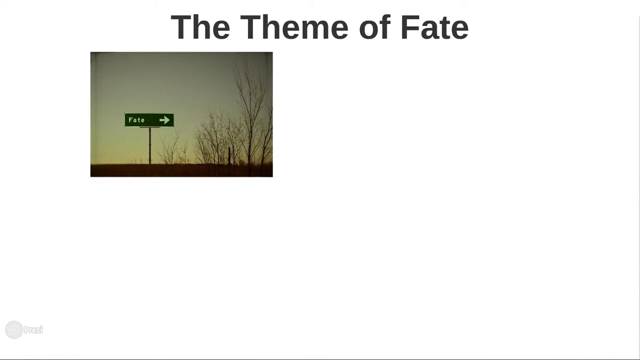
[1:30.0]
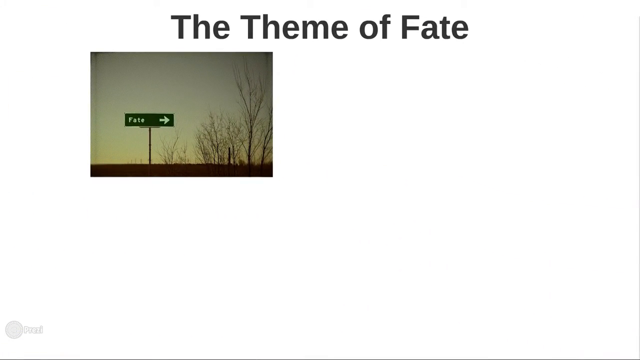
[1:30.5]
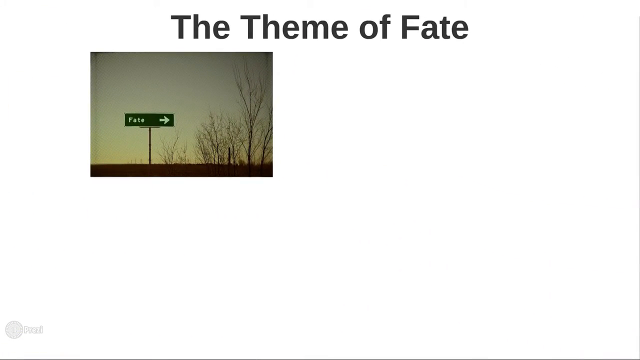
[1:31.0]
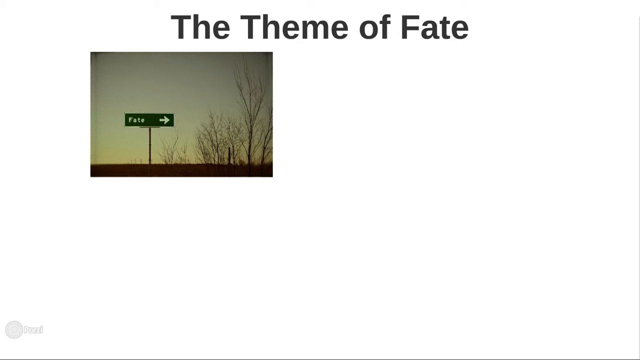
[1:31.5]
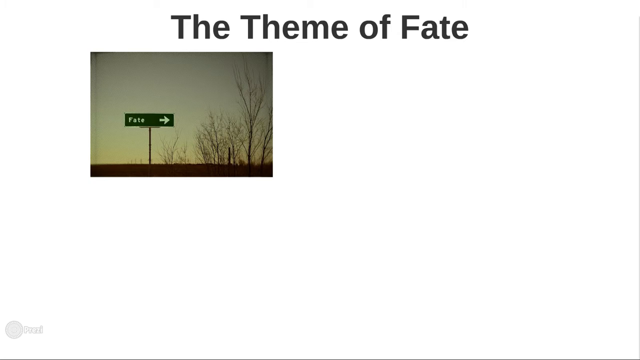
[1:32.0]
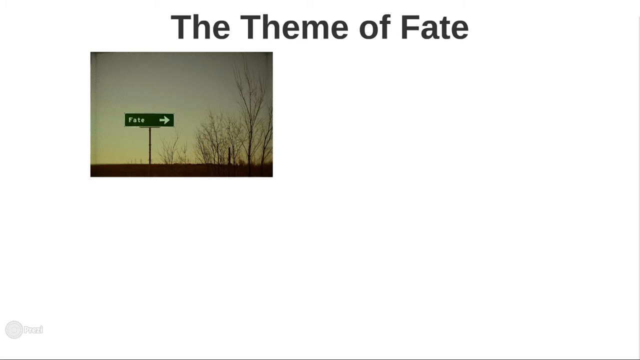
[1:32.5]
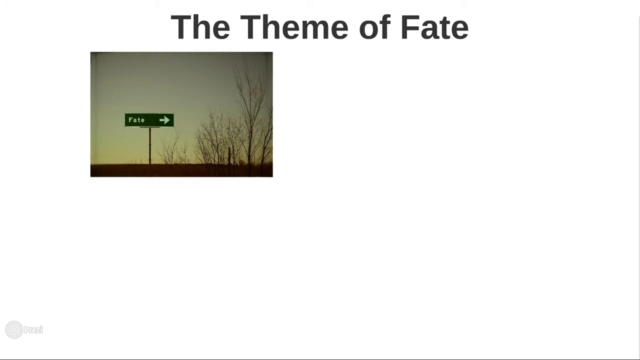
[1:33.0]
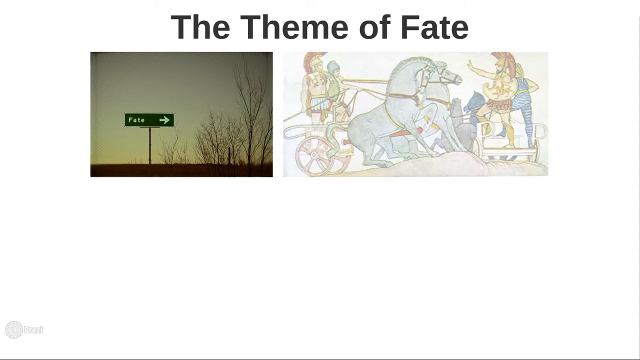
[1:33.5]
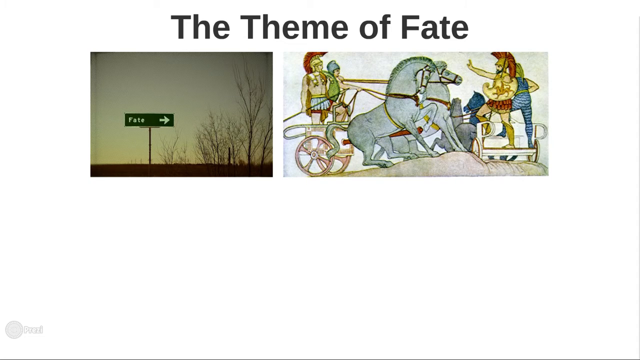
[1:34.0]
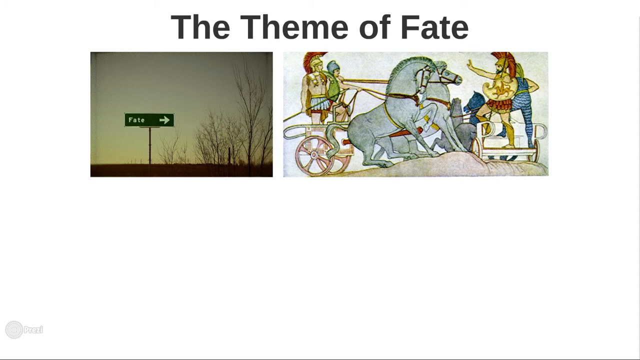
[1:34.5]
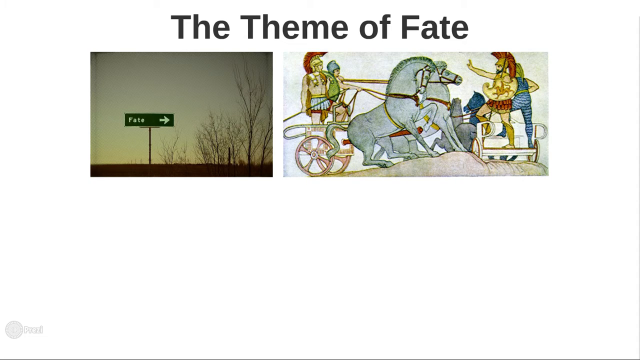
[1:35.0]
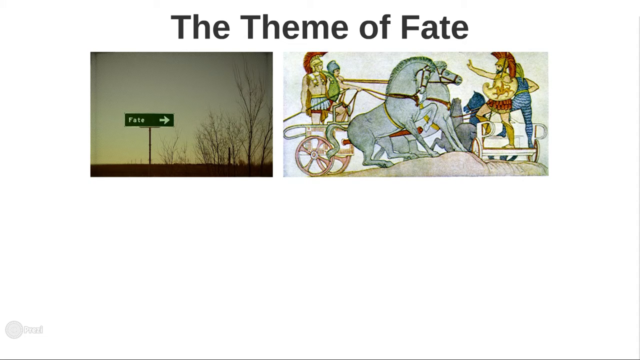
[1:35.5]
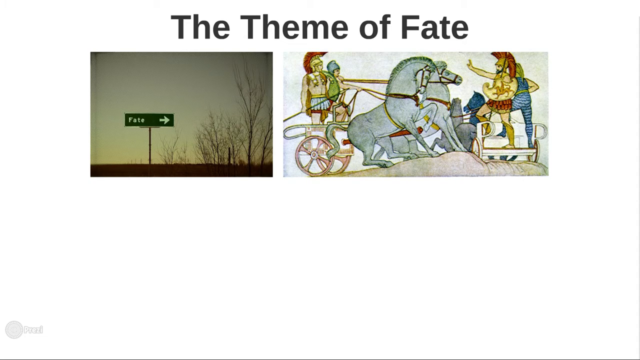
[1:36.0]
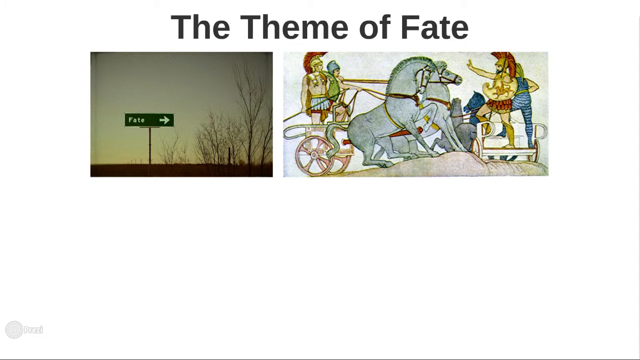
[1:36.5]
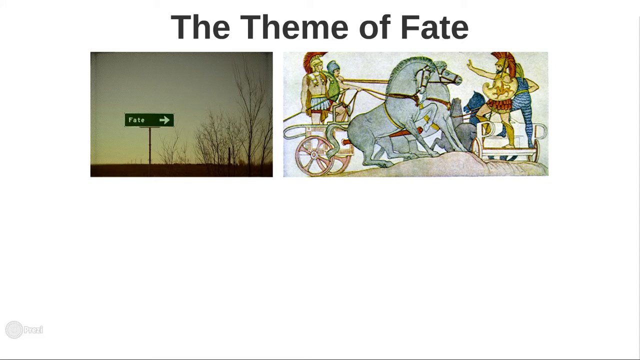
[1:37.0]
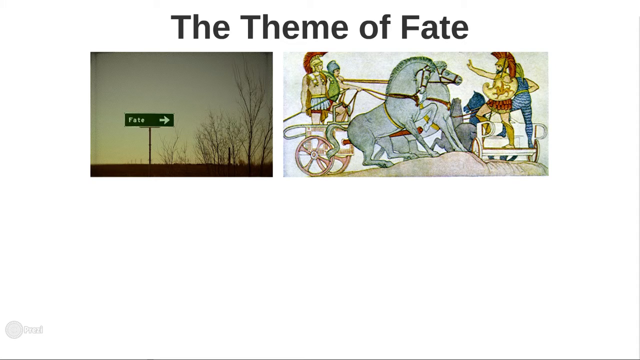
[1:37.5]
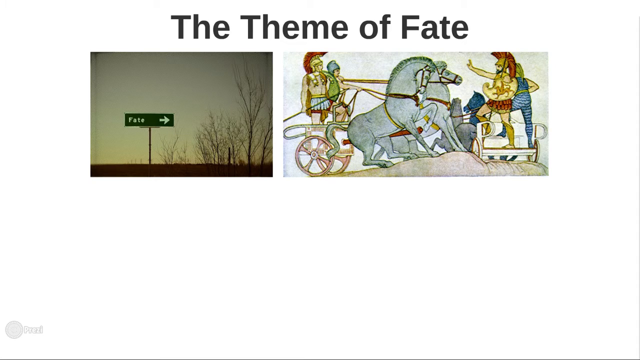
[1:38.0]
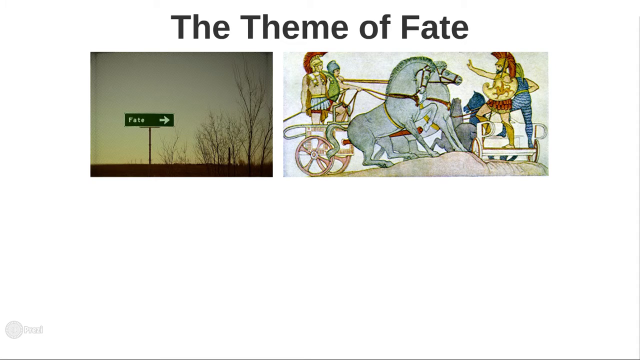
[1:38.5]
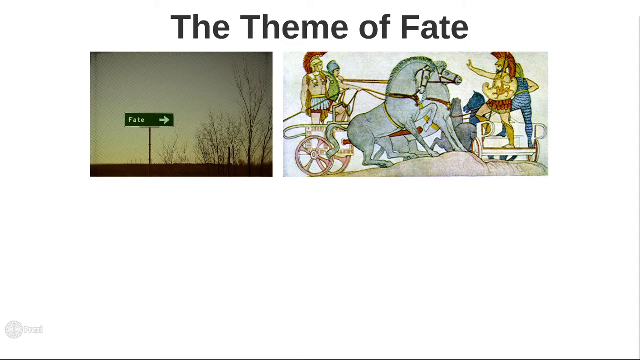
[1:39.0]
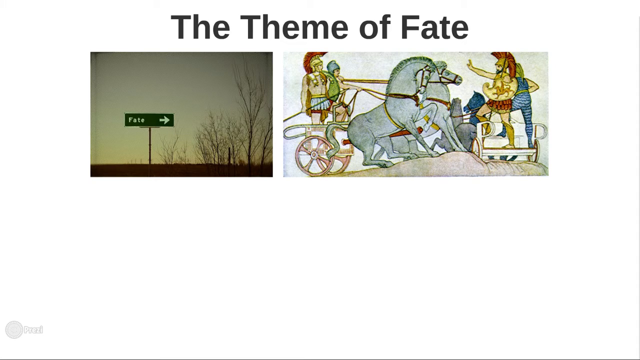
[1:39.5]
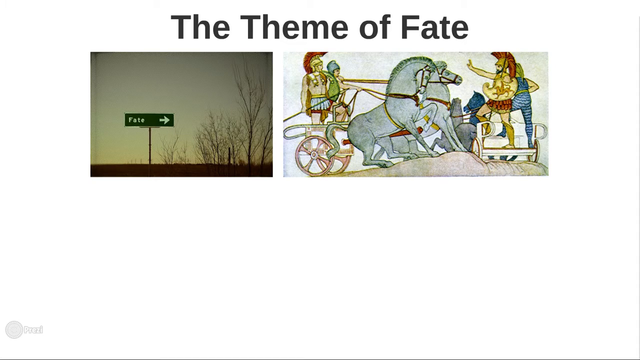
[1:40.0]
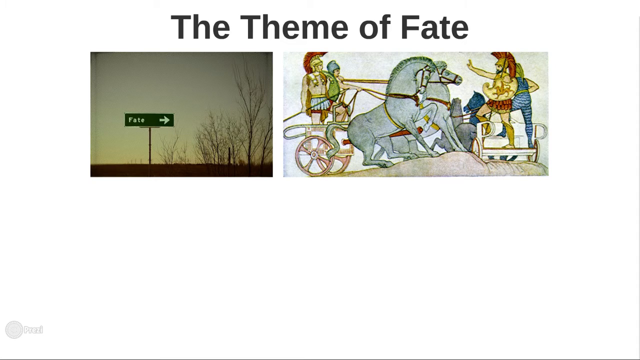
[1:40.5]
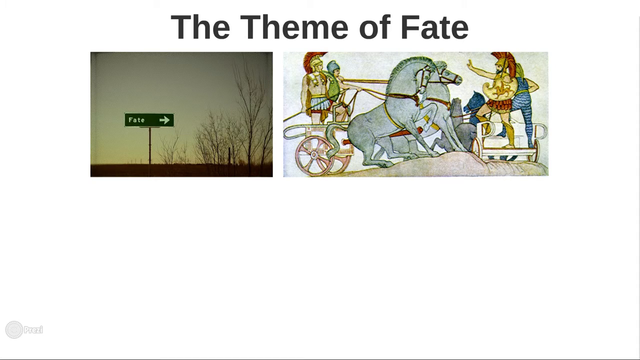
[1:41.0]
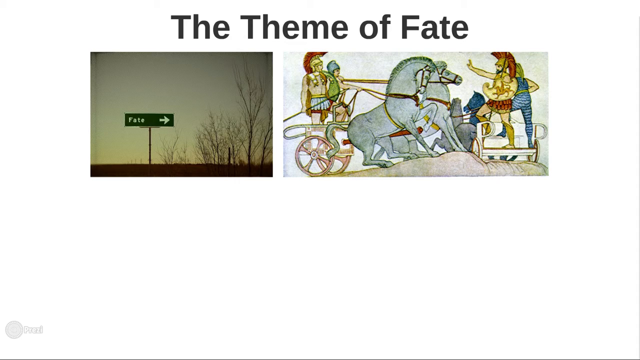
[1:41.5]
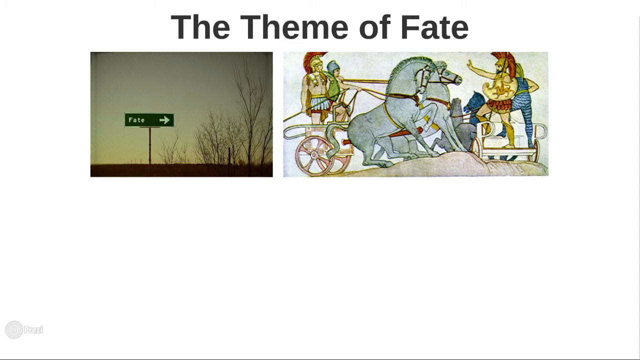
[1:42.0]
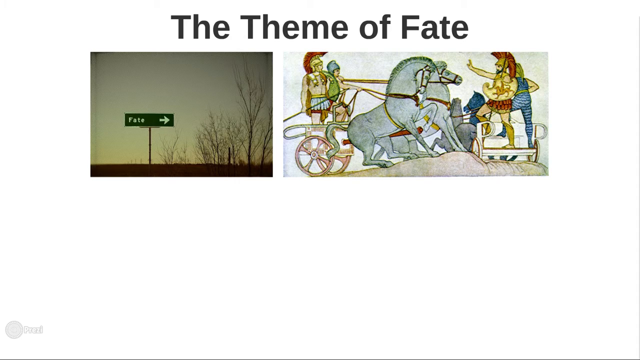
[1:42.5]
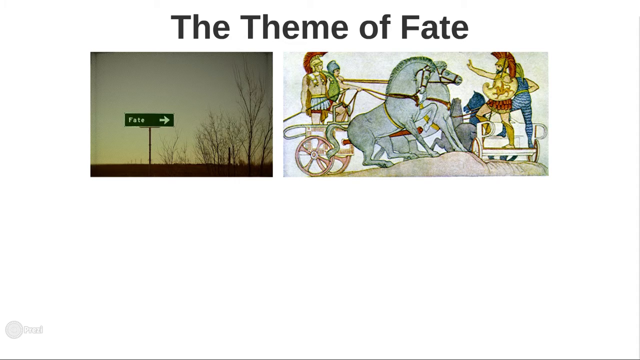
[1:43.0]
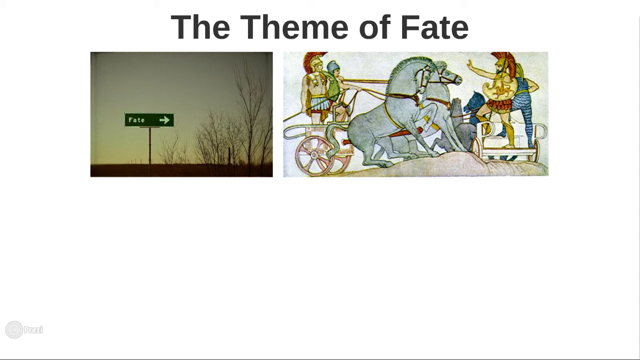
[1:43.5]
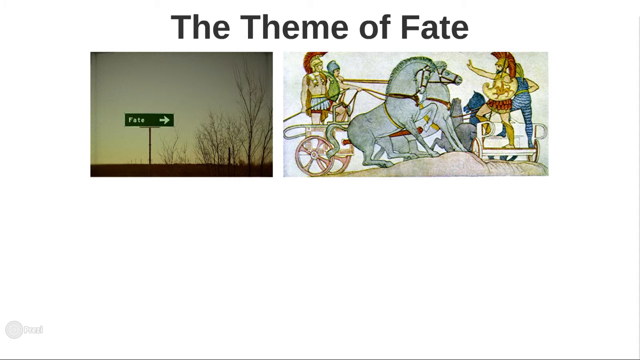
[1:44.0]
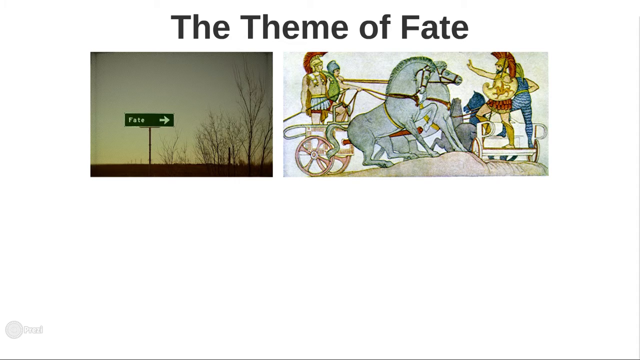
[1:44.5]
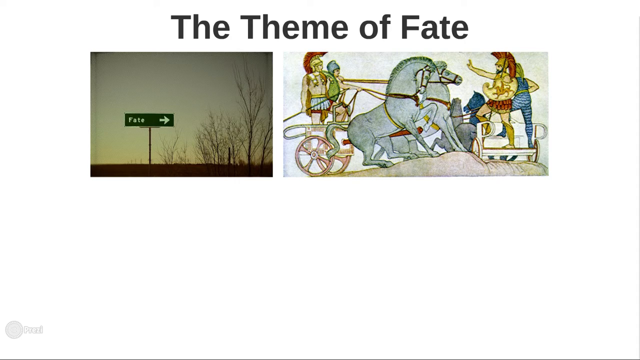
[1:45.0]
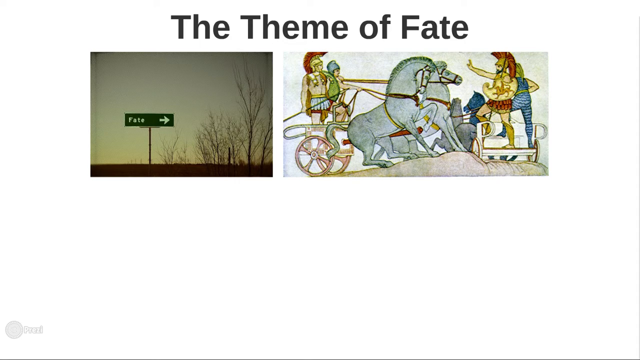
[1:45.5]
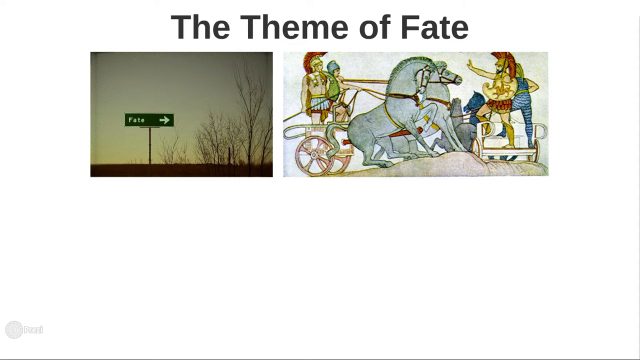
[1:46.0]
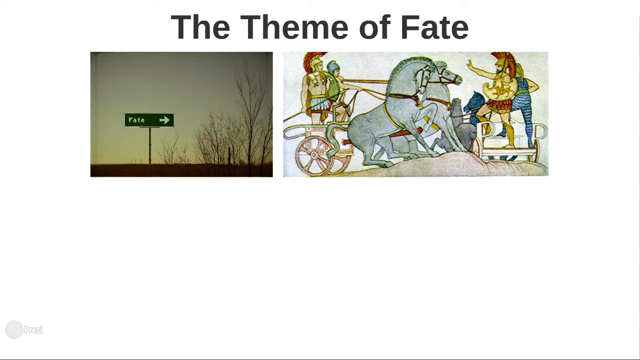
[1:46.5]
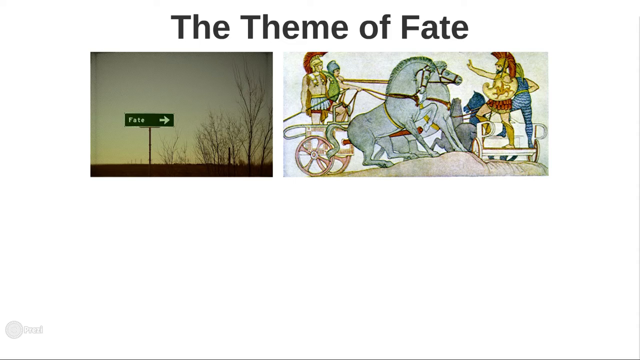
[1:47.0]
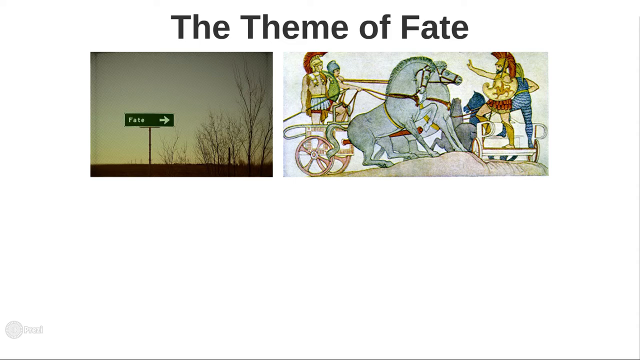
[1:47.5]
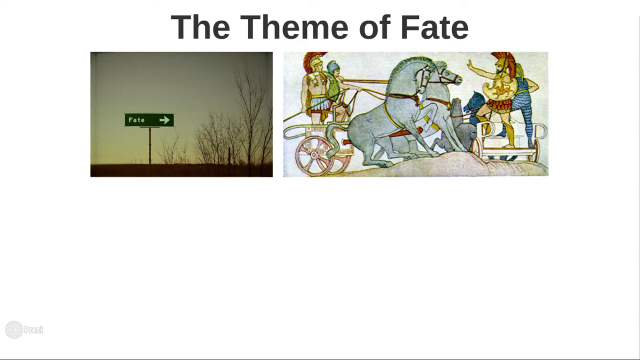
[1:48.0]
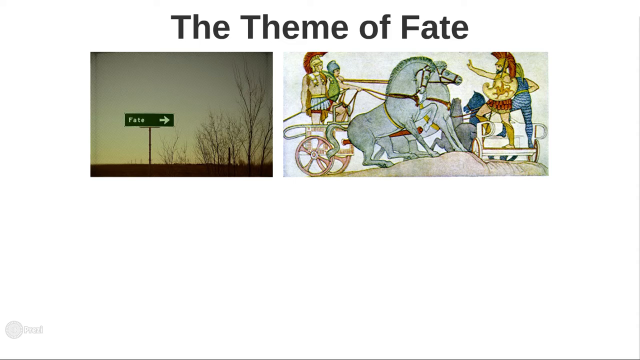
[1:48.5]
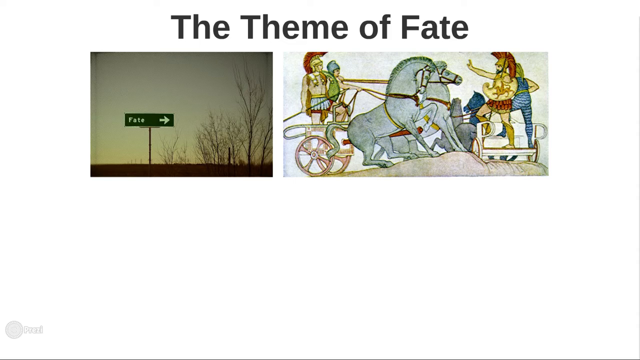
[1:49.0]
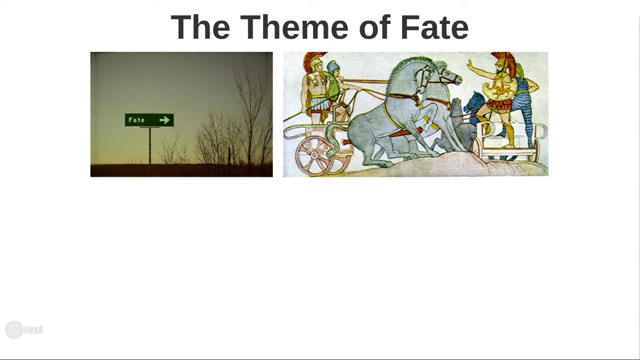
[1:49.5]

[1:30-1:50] A mostly white screen with black and gray at the bottom shows, in black writing, "the theme of fate". Below it, toward the top left, is a small picture that looks like a country scene with leafless trees and a green rectangular sign, like a street sign, reading "fate" in white, with a white arrow at its right end. Another picture appears to the right, showing two white-gray horses that appear to be ridden by a warrior, while another warrior stands in front telling them to stop; the horses look like they are being pulled back forcefully. Someone in the picture wears blue. The two pictures are side by side: the left one seems more modern day, while the right one seems historical, like a painting.